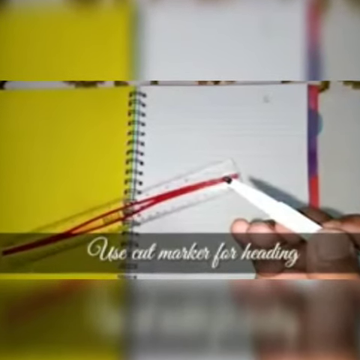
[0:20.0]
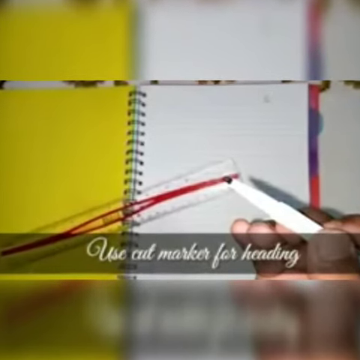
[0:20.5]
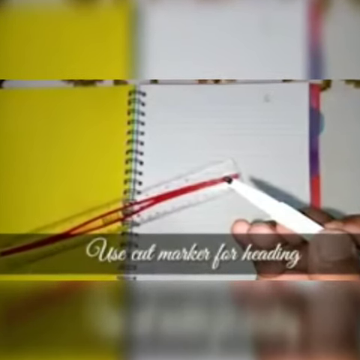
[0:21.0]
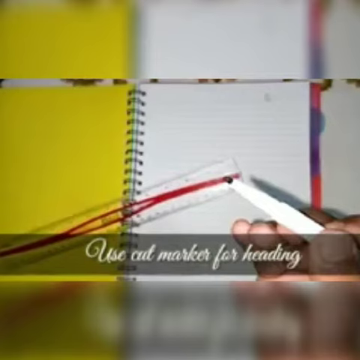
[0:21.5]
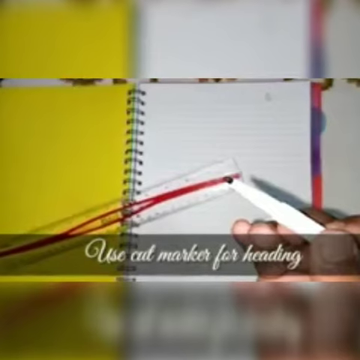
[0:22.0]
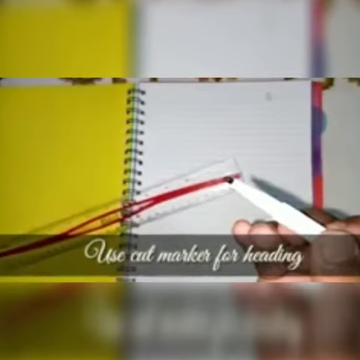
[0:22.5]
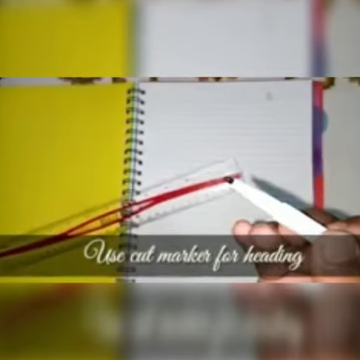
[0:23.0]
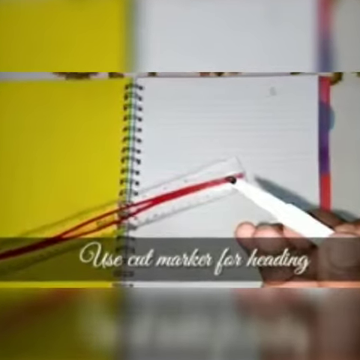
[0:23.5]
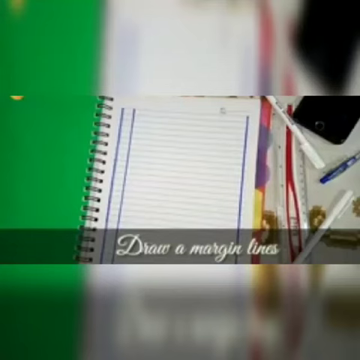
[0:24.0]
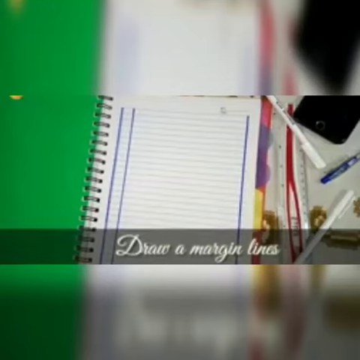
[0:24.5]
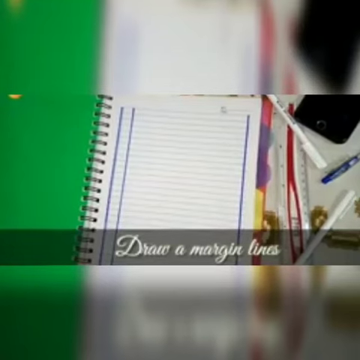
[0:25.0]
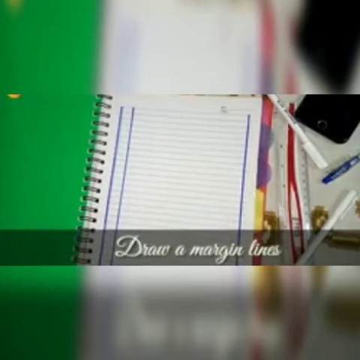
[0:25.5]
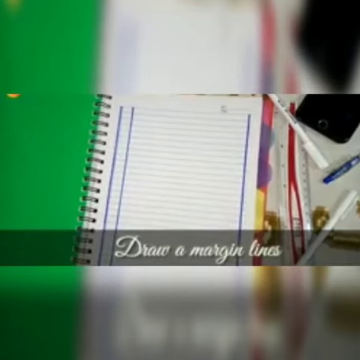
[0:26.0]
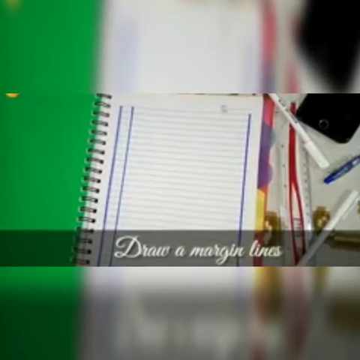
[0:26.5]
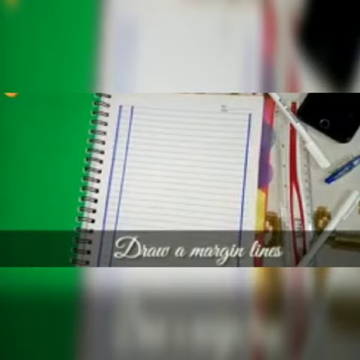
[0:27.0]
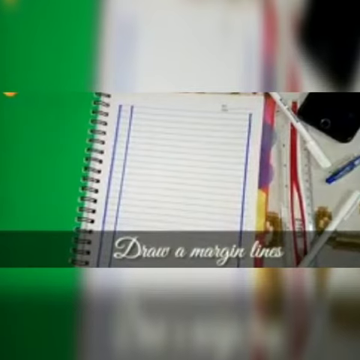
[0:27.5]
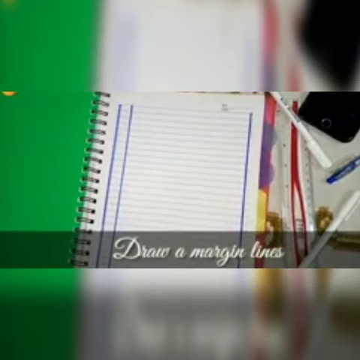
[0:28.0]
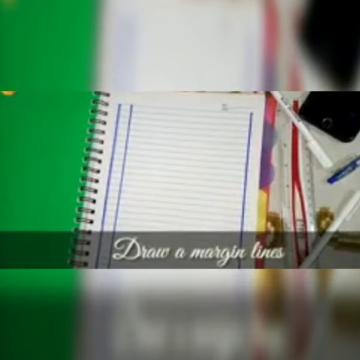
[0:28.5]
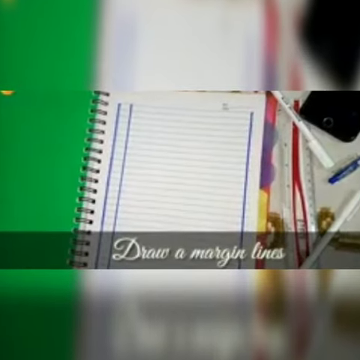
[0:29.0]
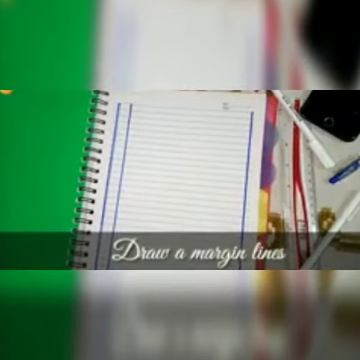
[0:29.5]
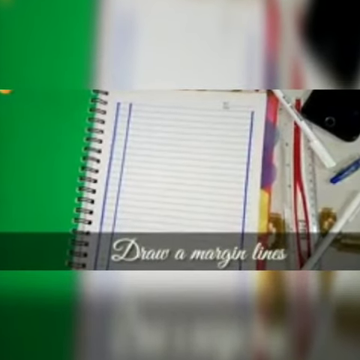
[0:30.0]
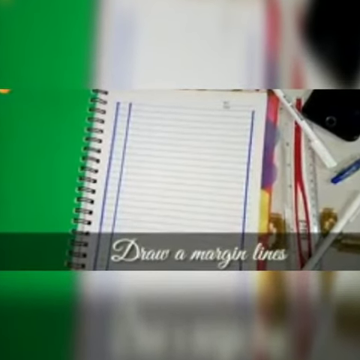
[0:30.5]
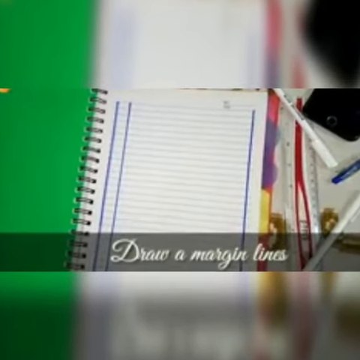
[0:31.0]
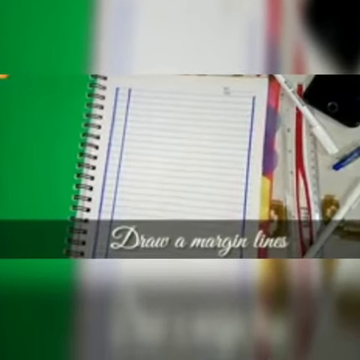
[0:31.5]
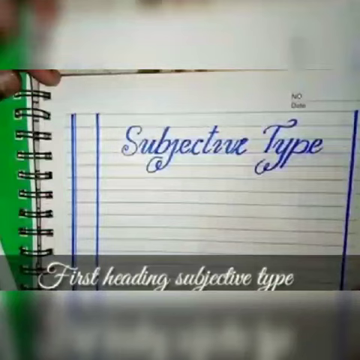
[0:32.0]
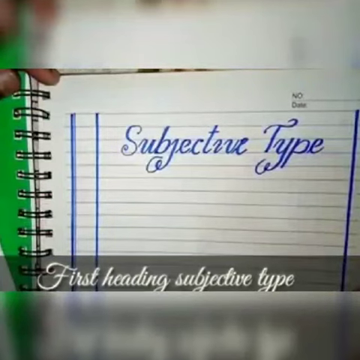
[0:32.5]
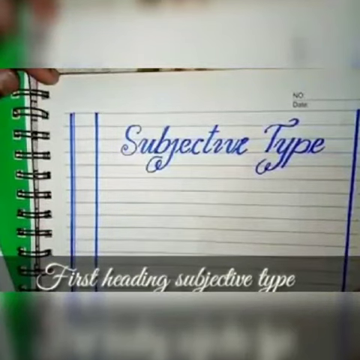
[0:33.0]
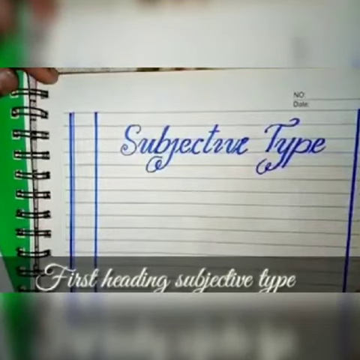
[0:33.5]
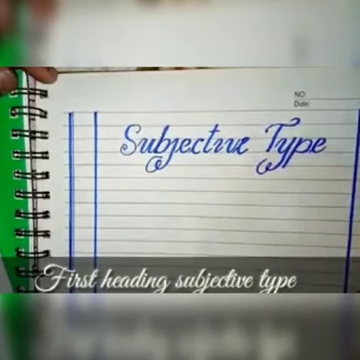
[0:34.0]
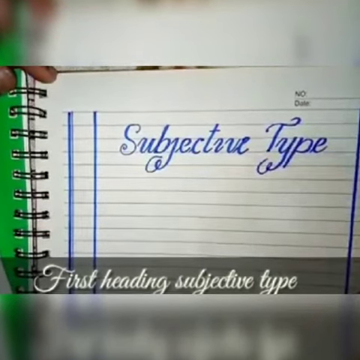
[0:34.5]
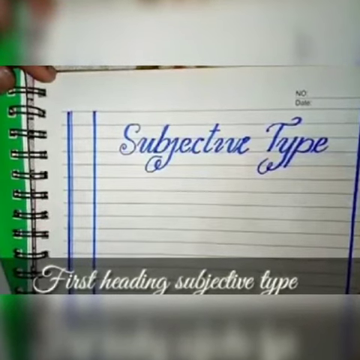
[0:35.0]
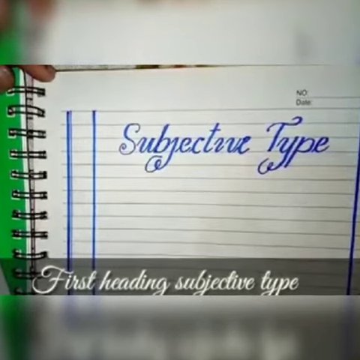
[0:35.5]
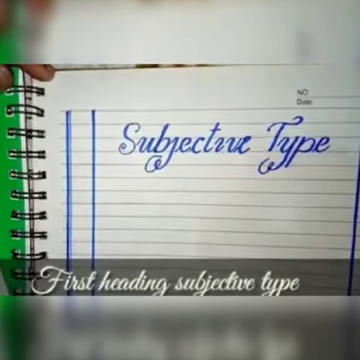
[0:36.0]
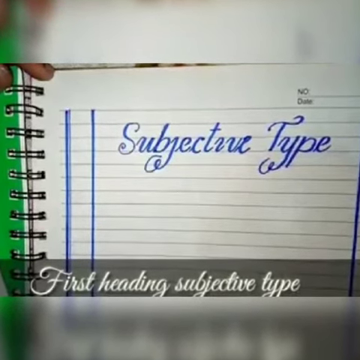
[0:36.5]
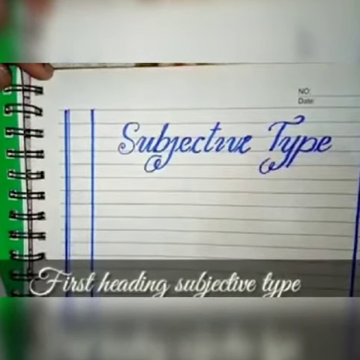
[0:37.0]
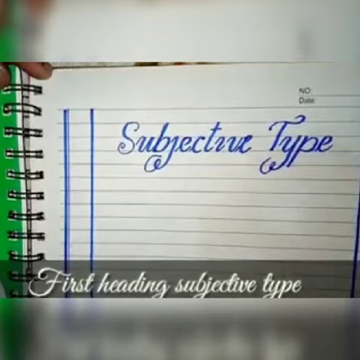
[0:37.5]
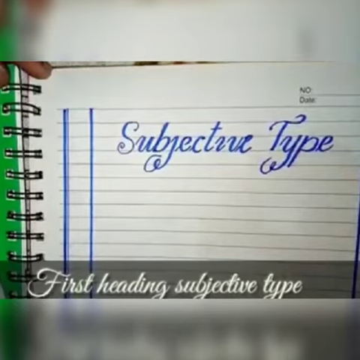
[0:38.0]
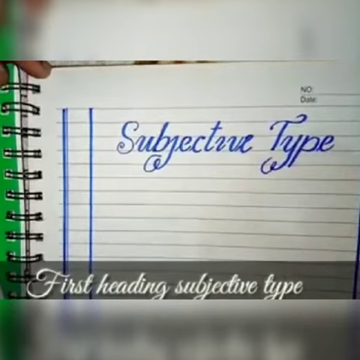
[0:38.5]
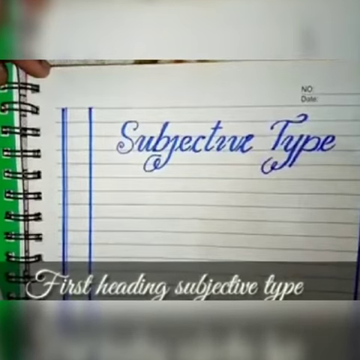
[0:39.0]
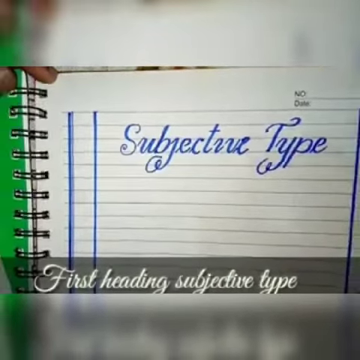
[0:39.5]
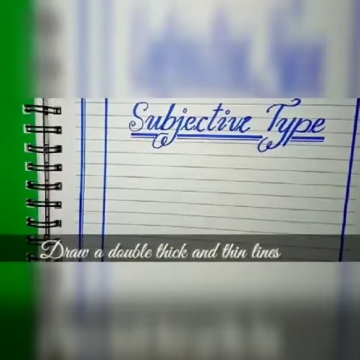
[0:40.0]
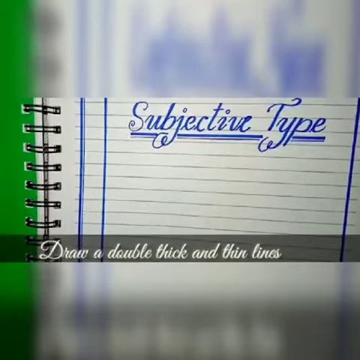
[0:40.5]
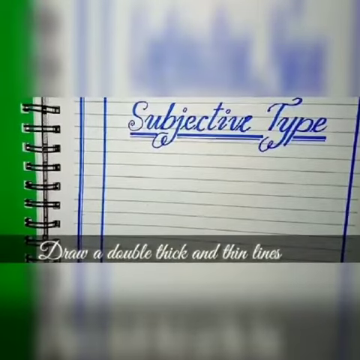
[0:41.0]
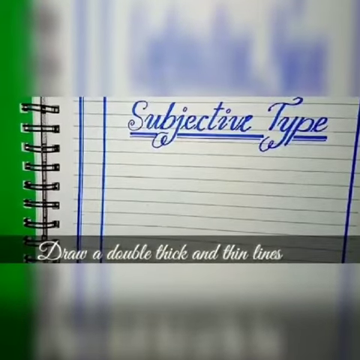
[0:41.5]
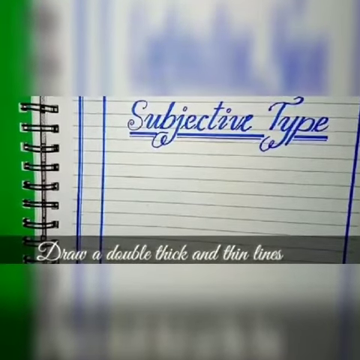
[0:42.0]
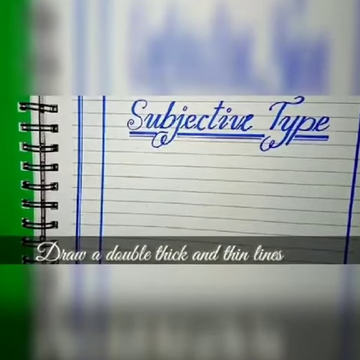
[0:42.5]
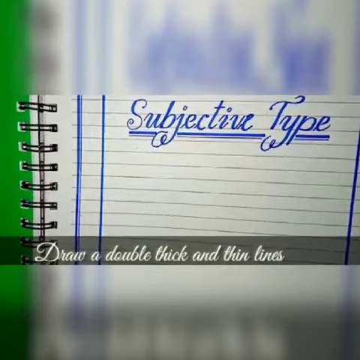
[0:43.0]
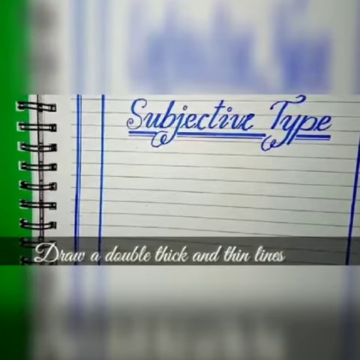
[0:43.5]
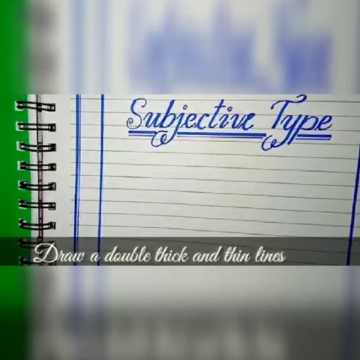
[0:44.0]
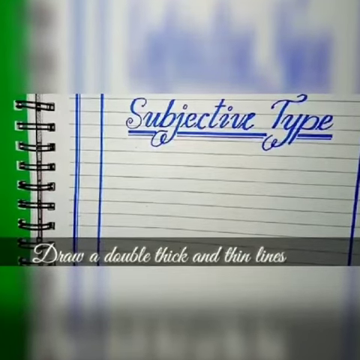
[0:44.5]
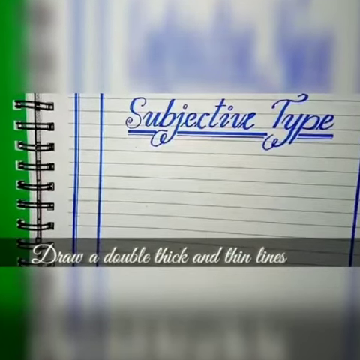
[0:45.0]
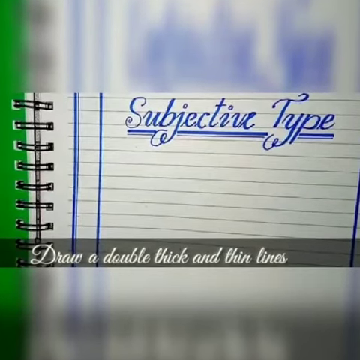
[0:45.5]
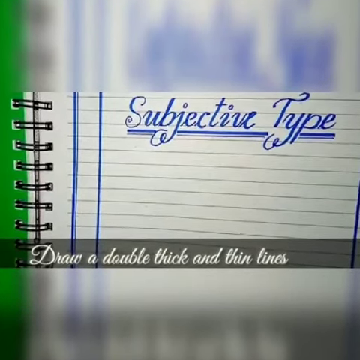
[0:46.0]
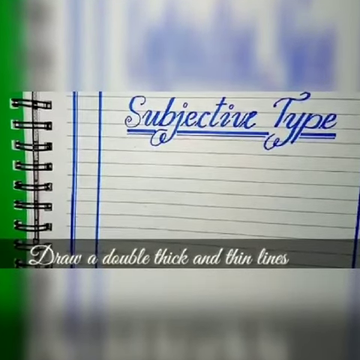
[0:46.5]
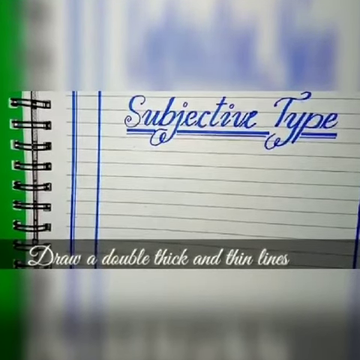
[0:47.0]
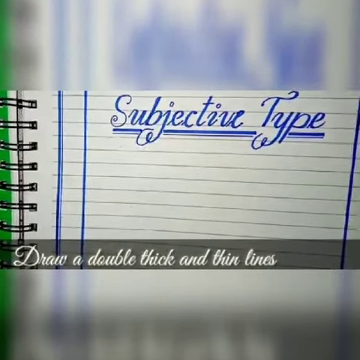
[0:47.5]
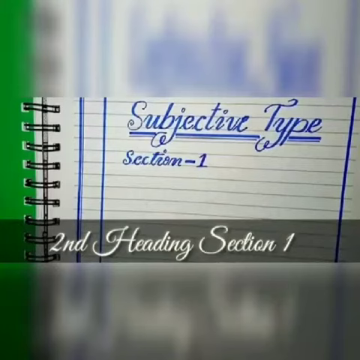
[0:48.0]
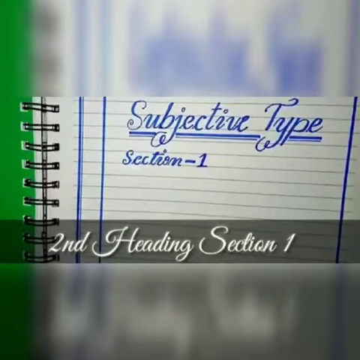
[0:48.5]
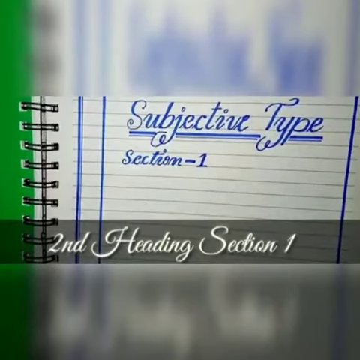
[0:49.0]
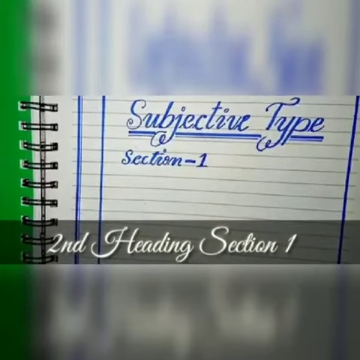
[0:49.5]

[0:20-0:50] The image almost seems doubled: the first layer is a little blurry and the second one placed on top is even blurrier, and it is cut off, with something at the top that almost makes it look like three images. It essentially shows a notebook, a ruler, a pen, and a person's hand holding the pen, not as if getting ready to write, with the palm of the hand visible. White text reads "use cut marker for heading." The image zooms in quickly and then comes back out to a different notebook, a green one, with the text "draw a margin line," and lines being drawn. Next to it on the table are an iPhone, two white pens, a blue pen, and the same ruler, which is clear with red inside. The image is again split three ways. It then switches to another spiral notebook that a person is holding; someone has written "subjective type" at the top in very pretty writing that takes up three lines. Another header reads "draw a double thick line."